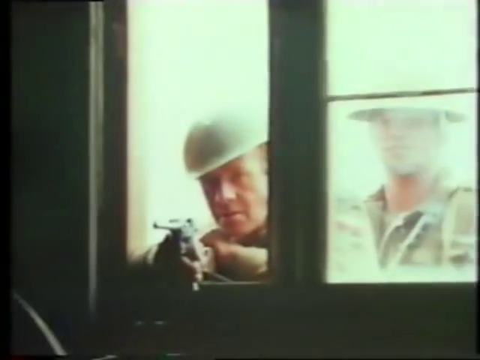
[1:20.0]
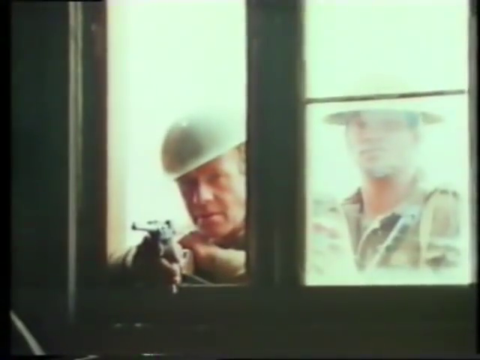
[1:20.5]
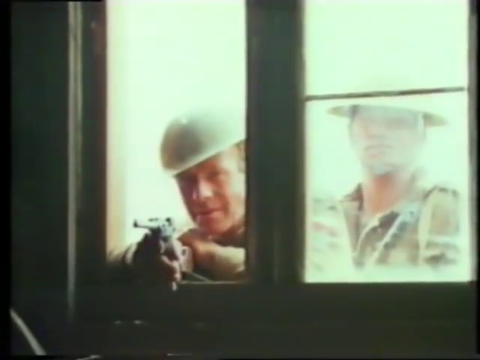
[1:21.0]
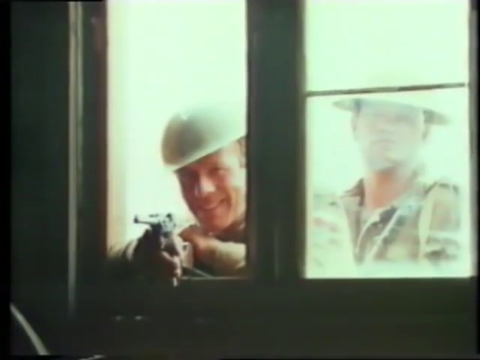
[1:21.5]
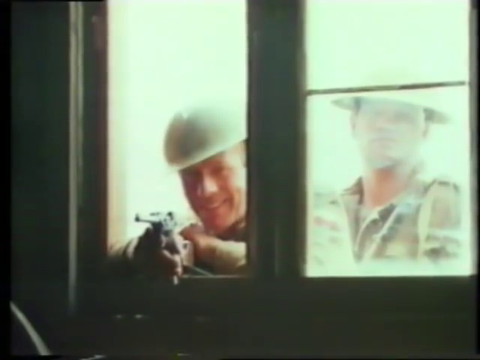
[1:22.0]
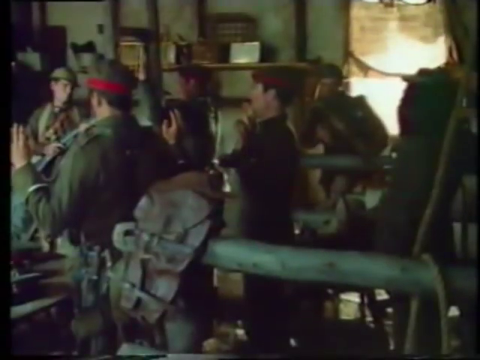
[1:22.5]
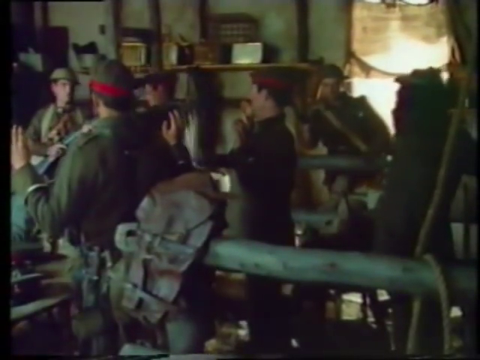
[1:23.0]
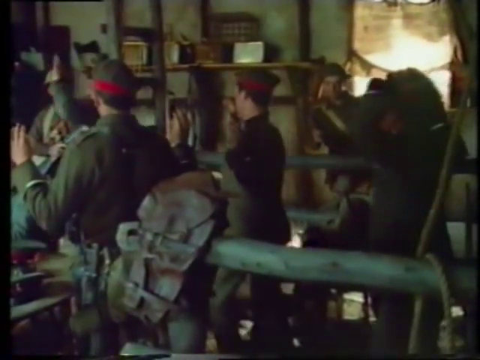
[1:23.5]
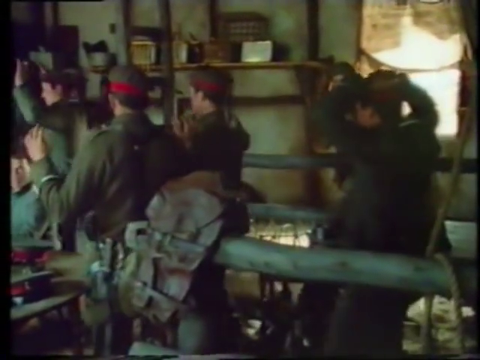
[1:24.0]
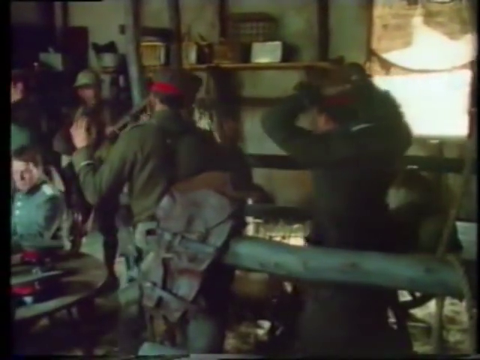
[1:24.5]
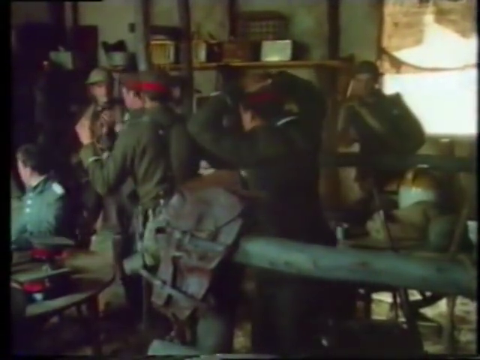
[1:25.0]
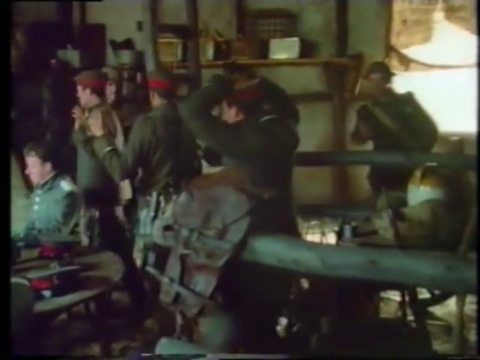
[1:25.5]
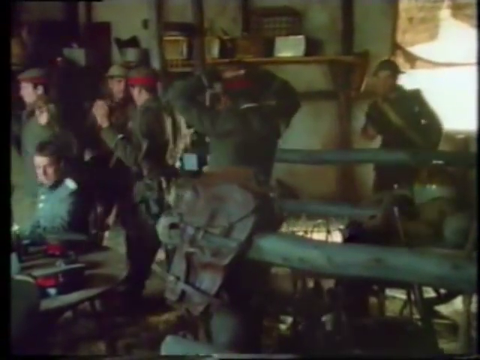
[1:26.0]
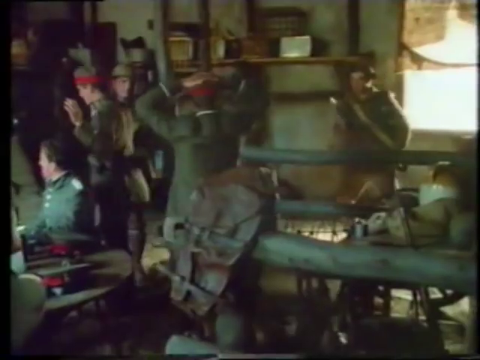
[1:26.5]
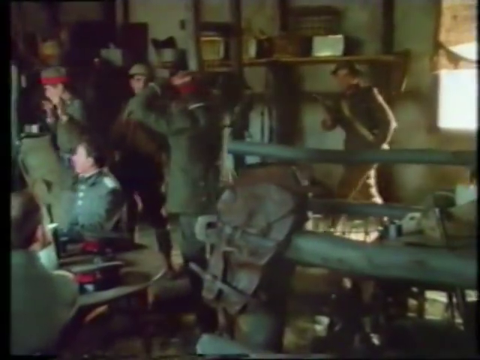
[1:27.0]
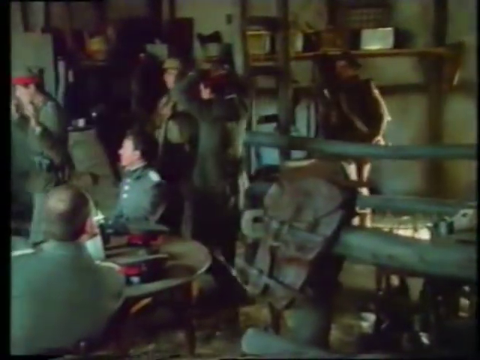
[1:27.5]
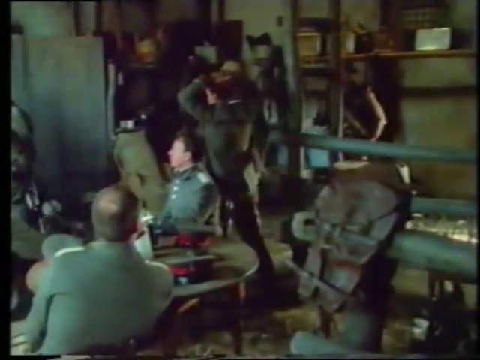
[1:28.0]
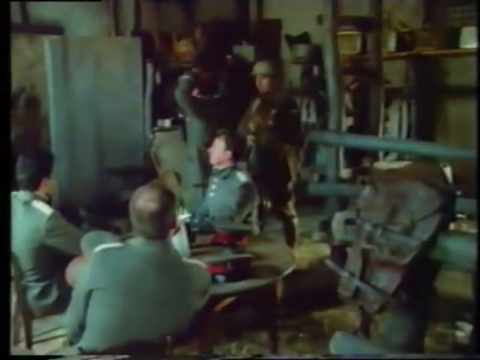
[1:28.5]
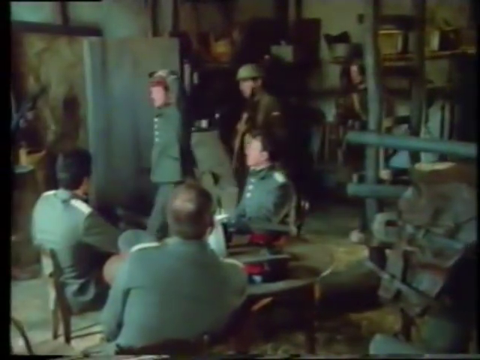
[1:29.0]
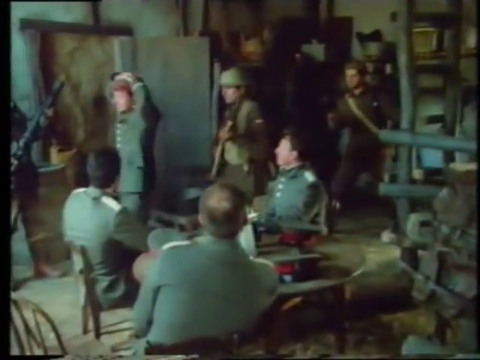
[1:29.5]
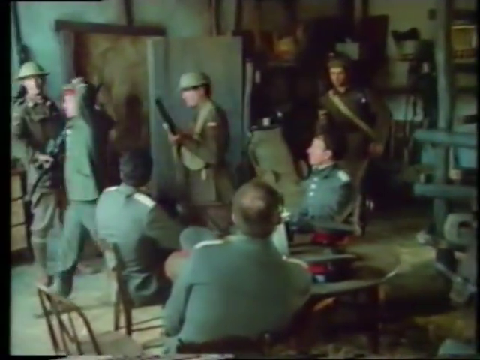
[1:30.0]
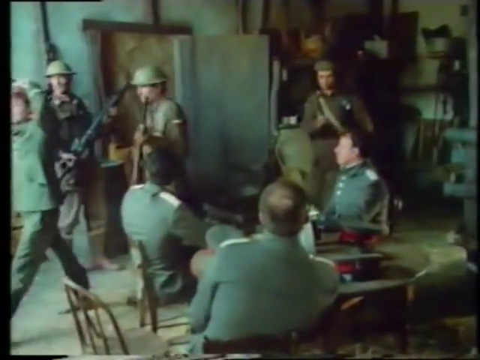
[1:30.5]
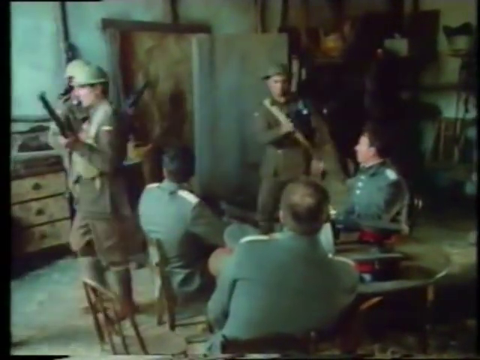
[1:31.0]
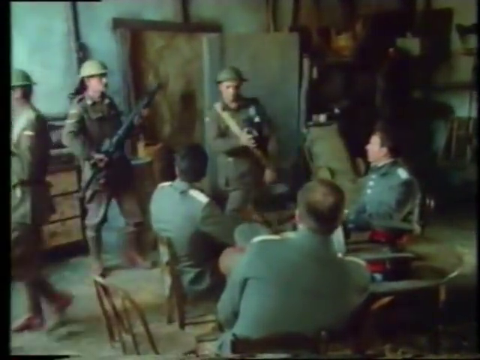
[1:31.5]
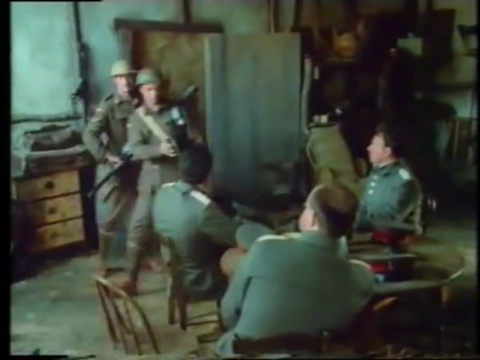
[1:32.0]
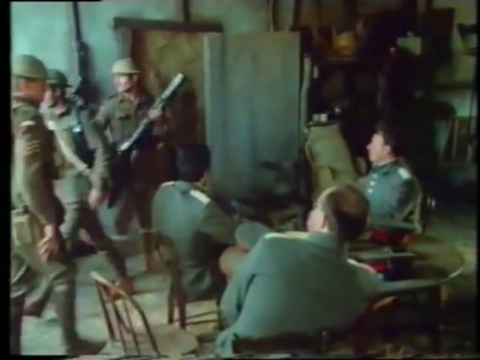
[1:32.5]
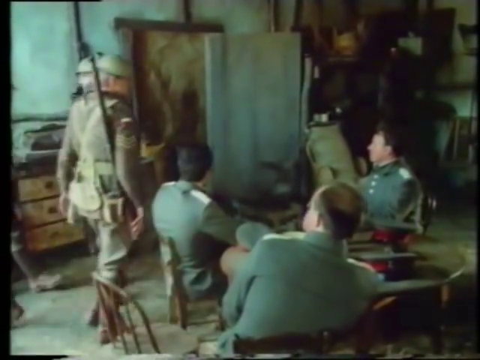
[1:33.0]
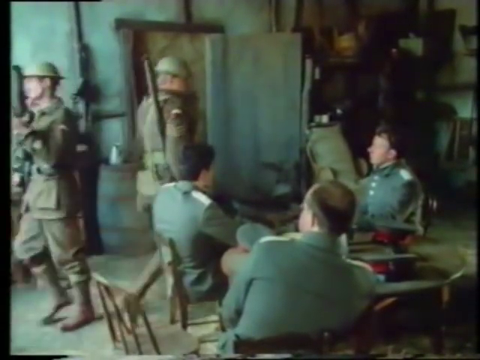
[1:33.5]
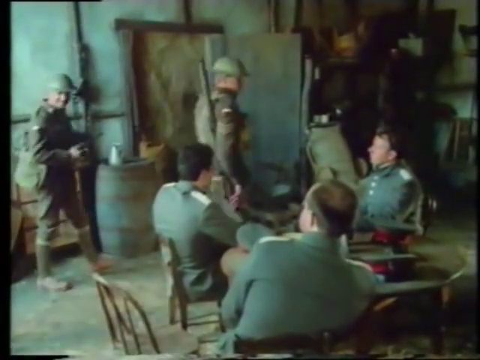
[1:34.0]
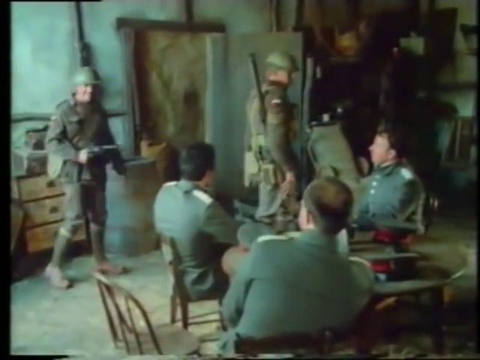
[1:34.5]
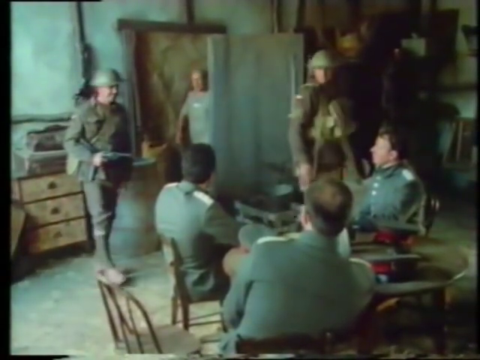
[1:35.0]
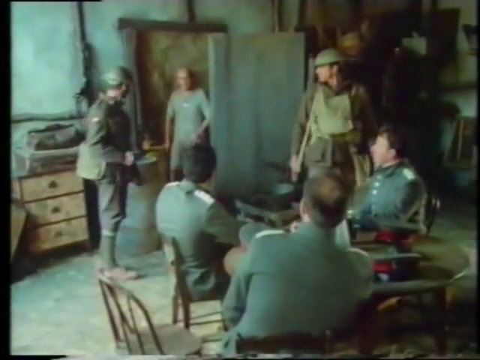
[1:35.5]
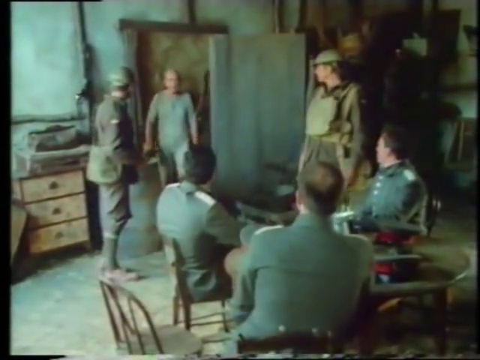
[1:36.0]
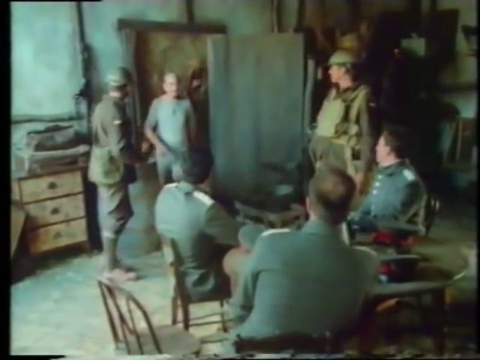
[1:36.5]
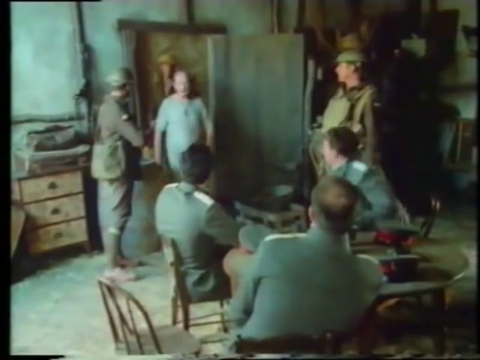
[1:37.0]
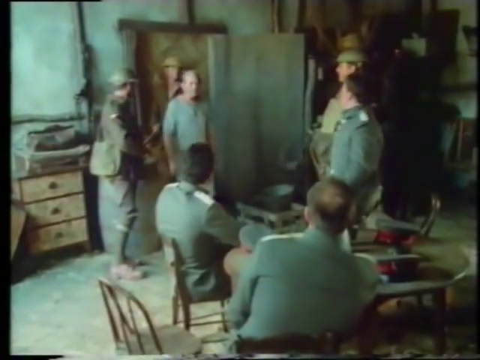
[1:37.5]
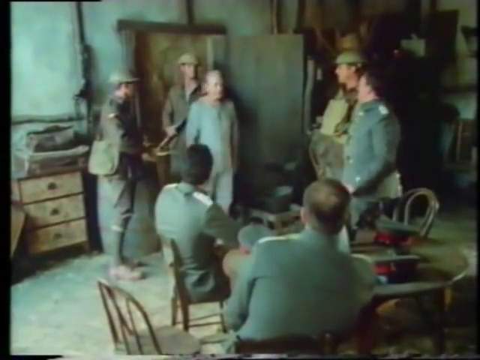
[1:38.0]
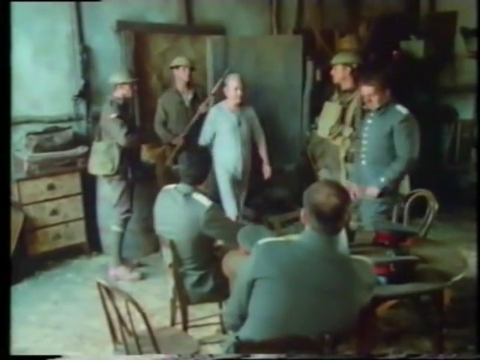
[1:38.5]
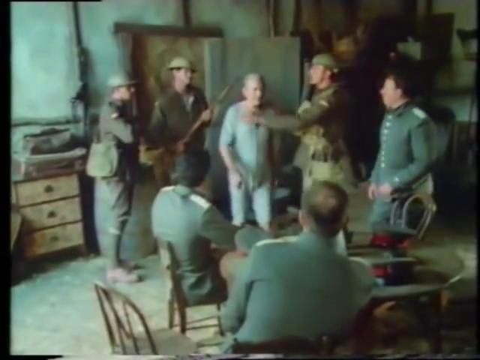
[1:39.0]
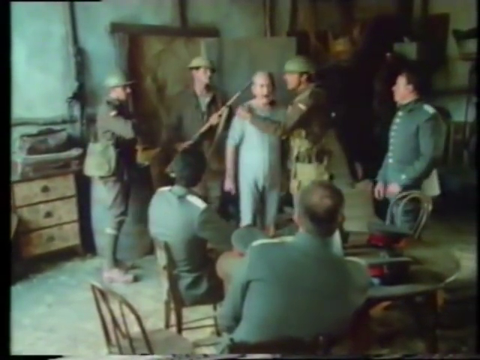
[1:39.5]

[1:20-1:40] A man at a window points a gun at another man sitting in a dark room; the man pointing the gun wears a uniform like a military man. In another scene, many uniformed men are in a room with some mechanical equipment, either putting their hands on their heads or raising their hands in the air in surrender, while three men sit at a round table. A man without a uniform walks in, and one of the military men hugs him and taps him on the shoulder, like a welcome. The group of men with their hands up walk out of the room. Other men carrying AK-47s and other long weapons usher the man without a uniform in to see the generals sitting at the table.